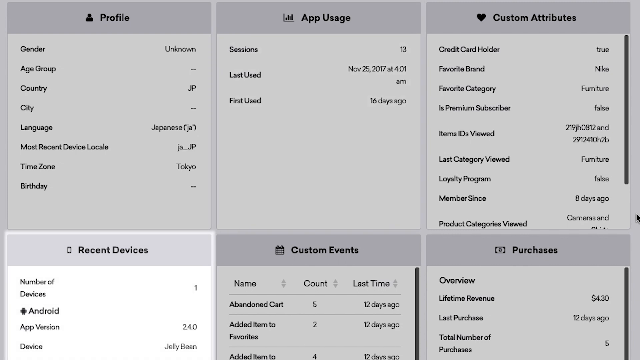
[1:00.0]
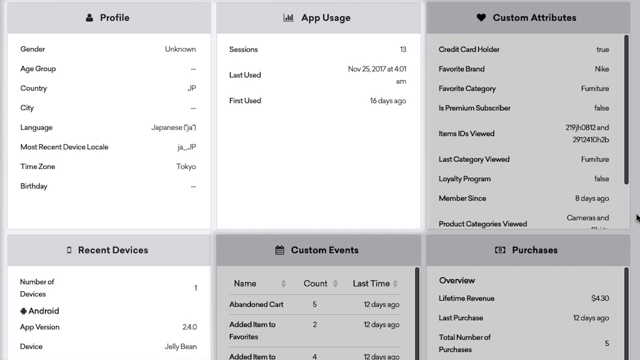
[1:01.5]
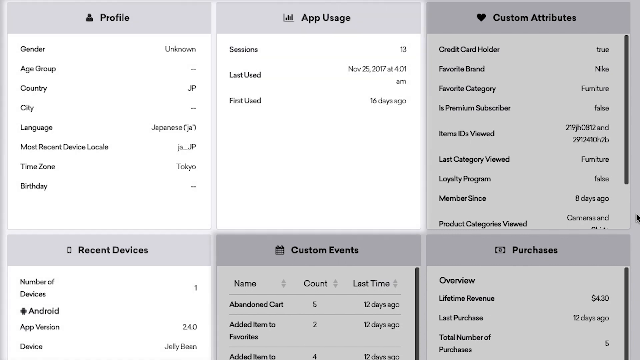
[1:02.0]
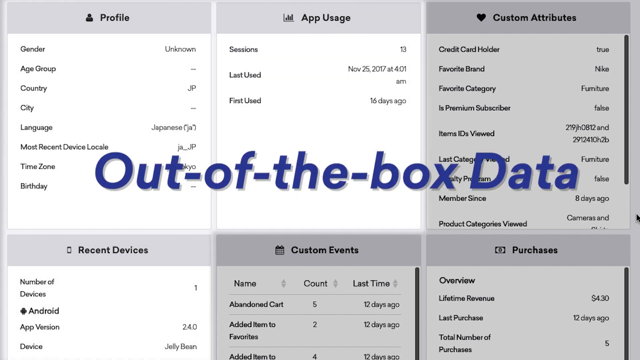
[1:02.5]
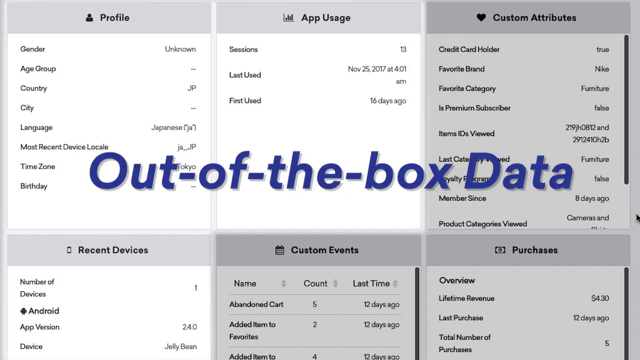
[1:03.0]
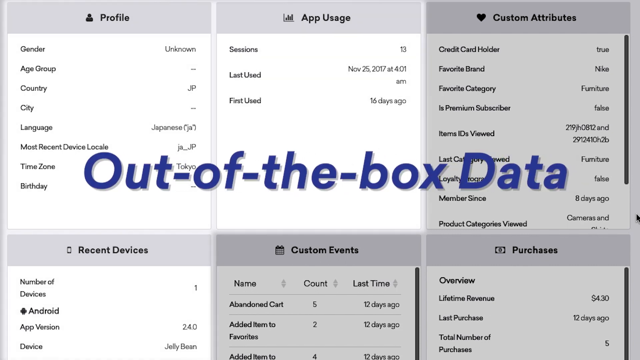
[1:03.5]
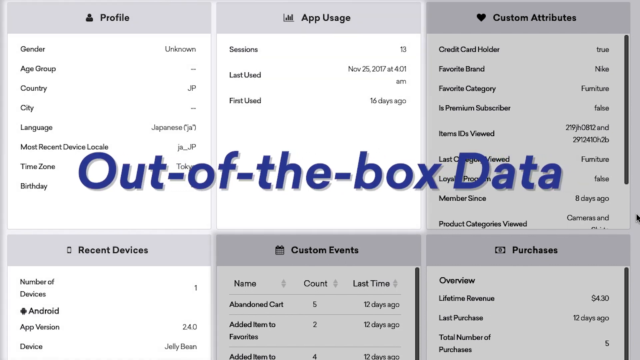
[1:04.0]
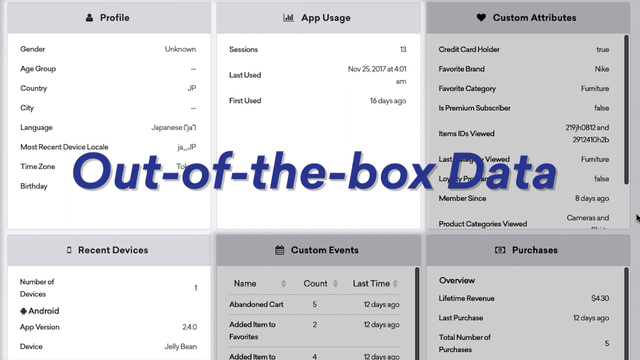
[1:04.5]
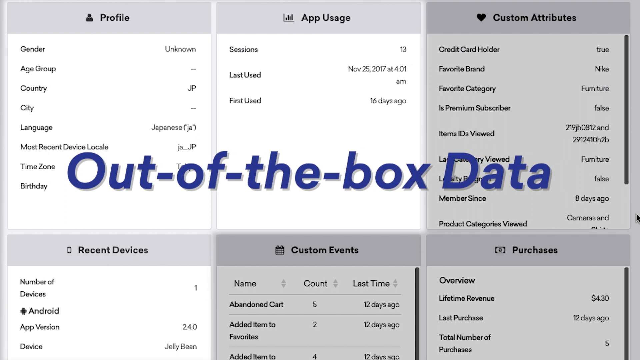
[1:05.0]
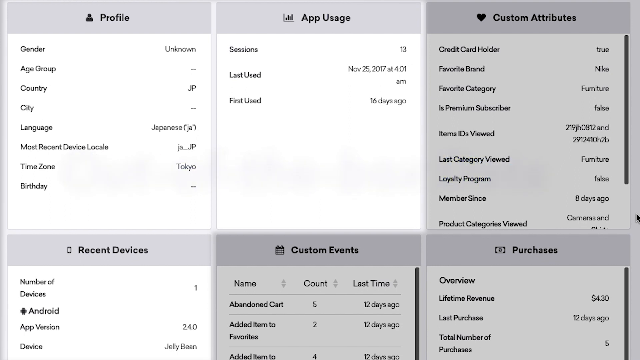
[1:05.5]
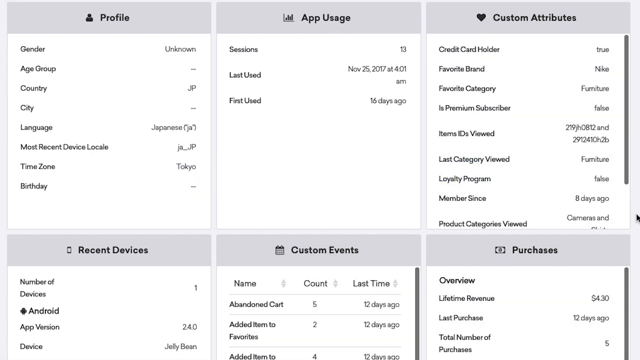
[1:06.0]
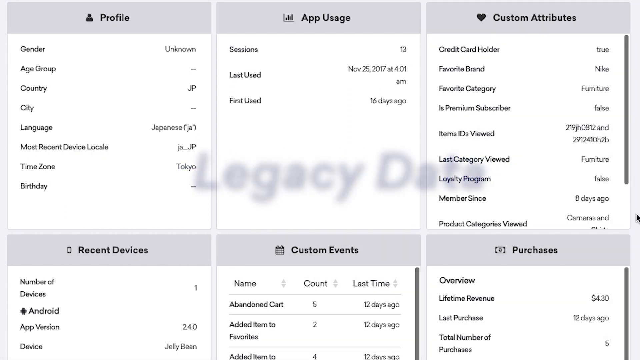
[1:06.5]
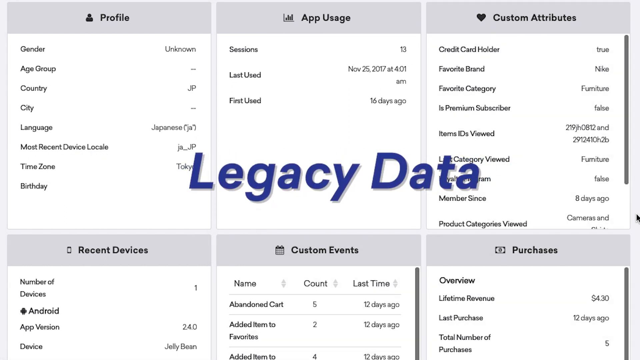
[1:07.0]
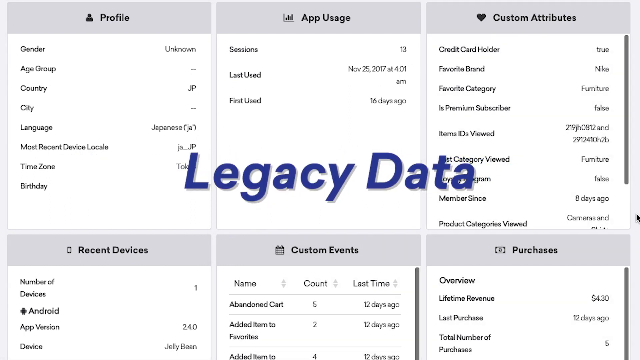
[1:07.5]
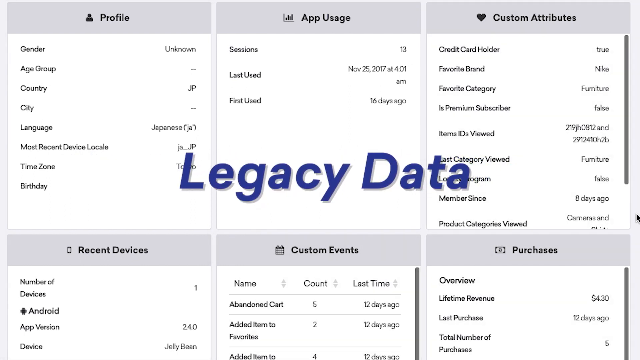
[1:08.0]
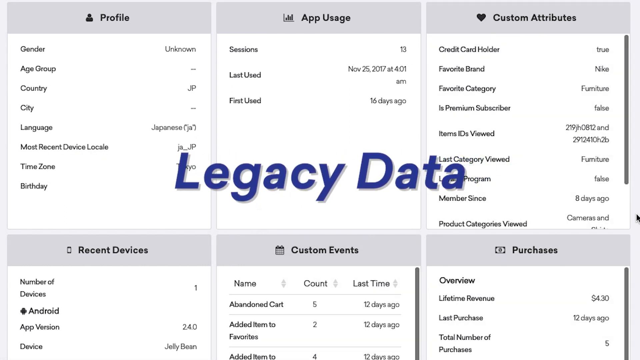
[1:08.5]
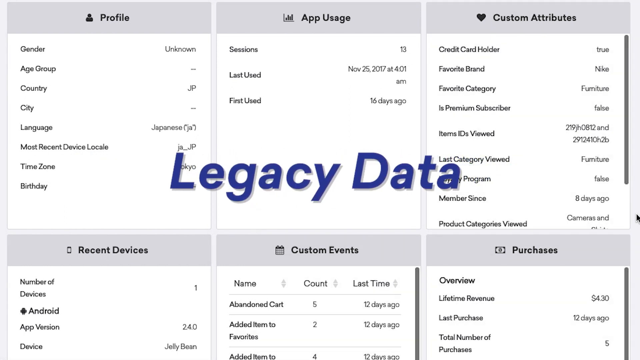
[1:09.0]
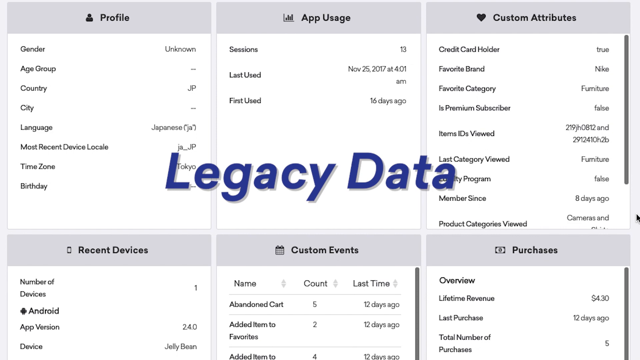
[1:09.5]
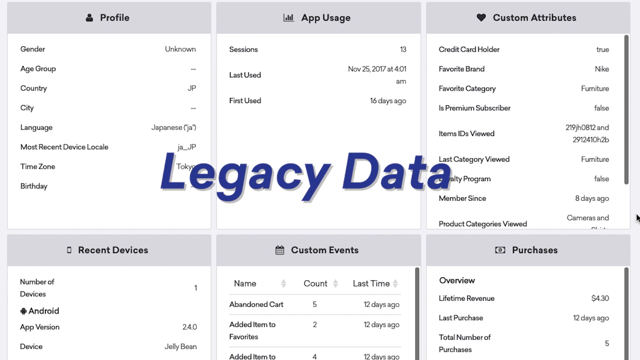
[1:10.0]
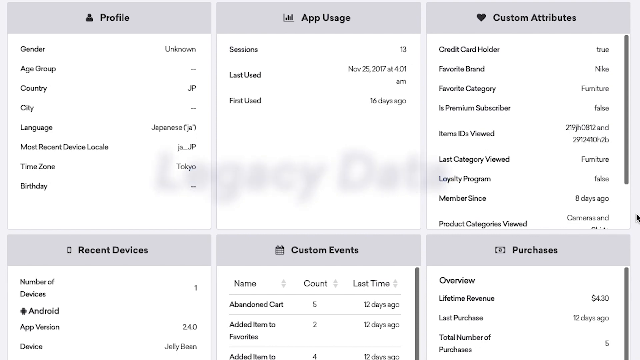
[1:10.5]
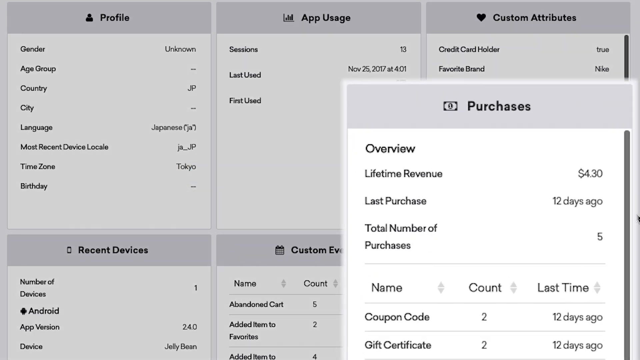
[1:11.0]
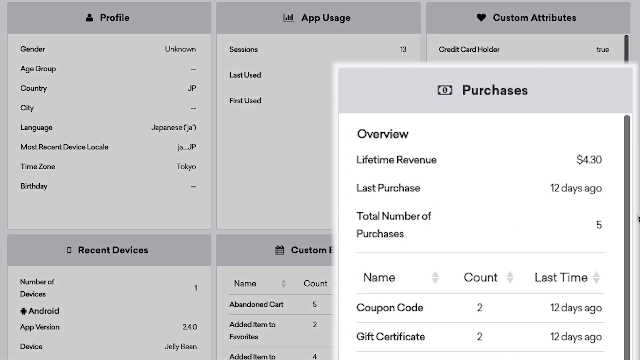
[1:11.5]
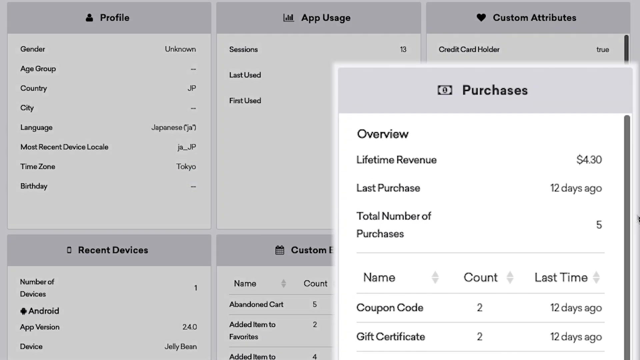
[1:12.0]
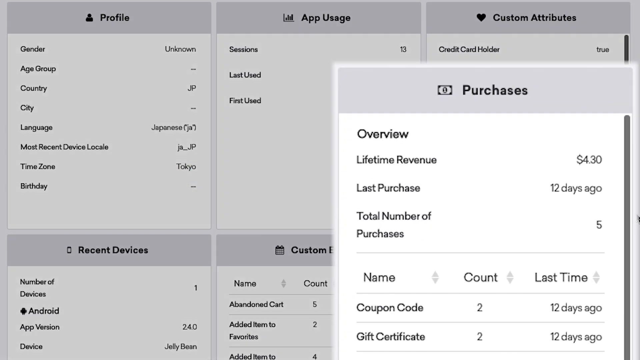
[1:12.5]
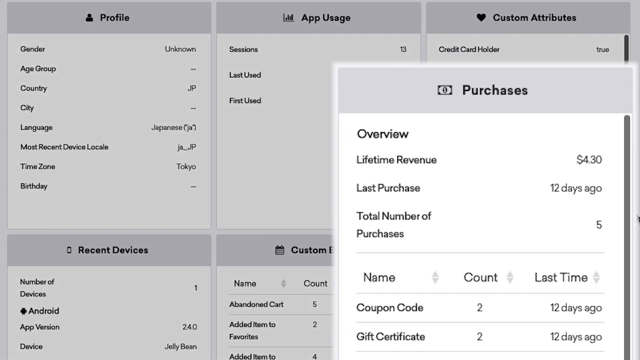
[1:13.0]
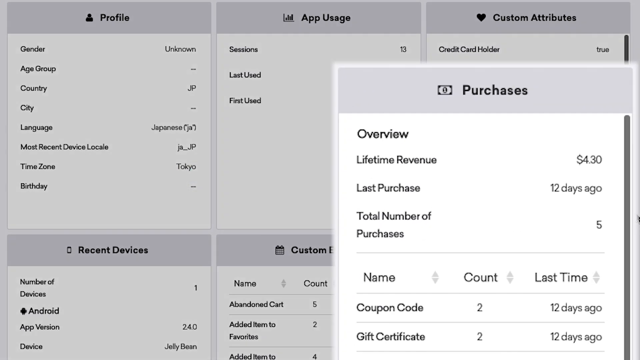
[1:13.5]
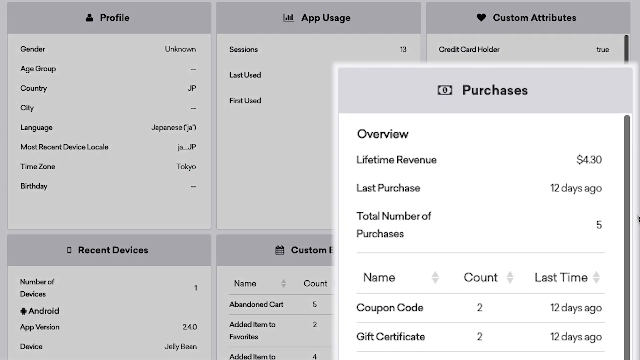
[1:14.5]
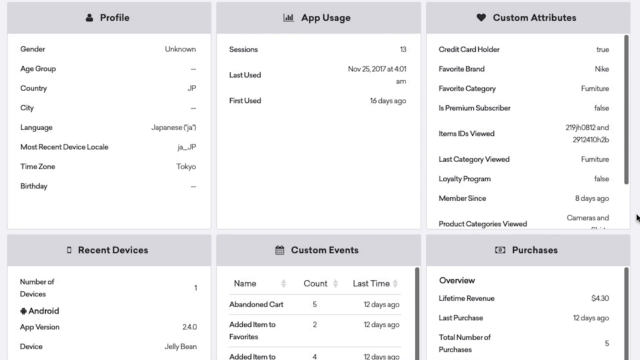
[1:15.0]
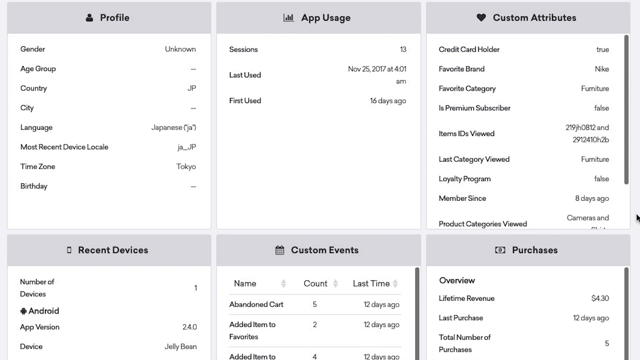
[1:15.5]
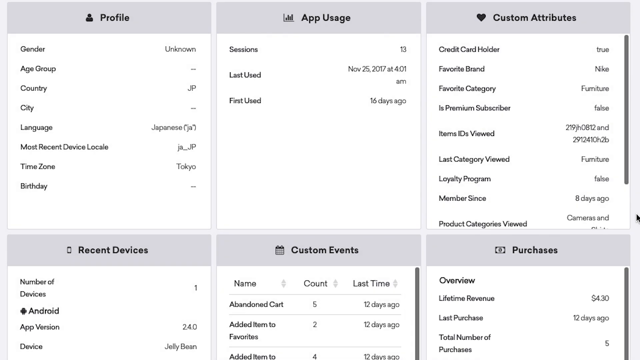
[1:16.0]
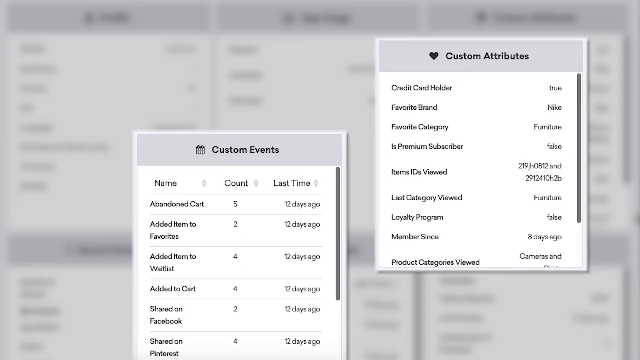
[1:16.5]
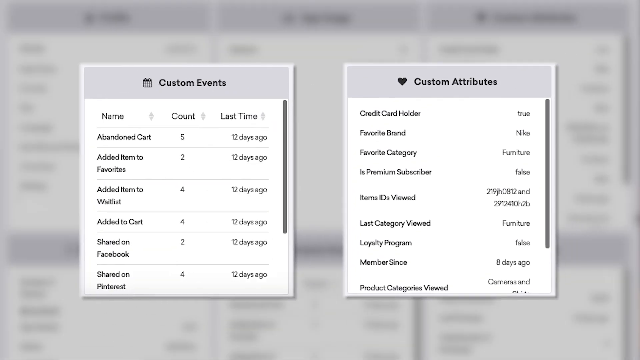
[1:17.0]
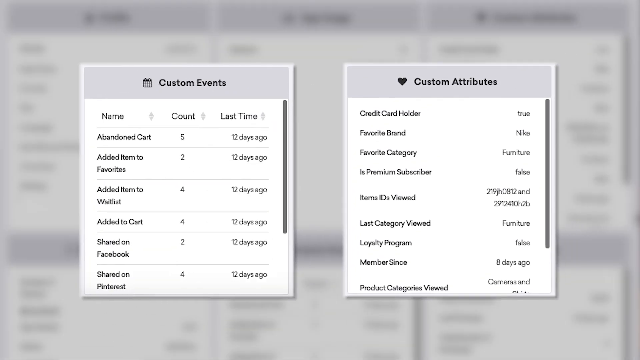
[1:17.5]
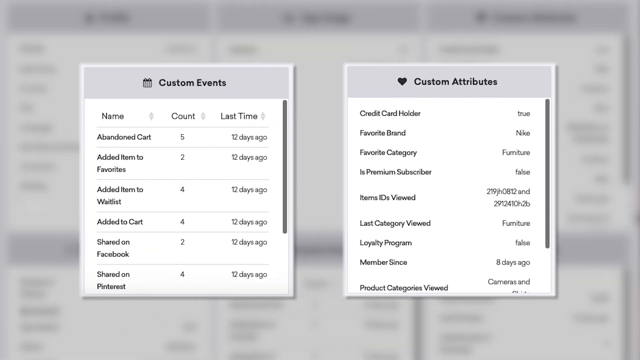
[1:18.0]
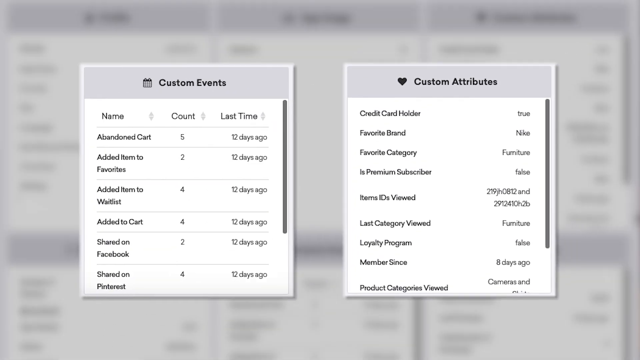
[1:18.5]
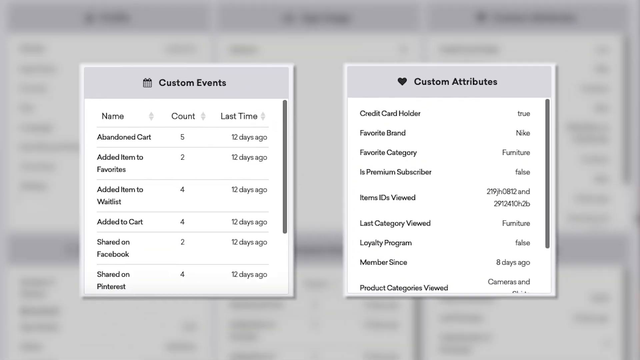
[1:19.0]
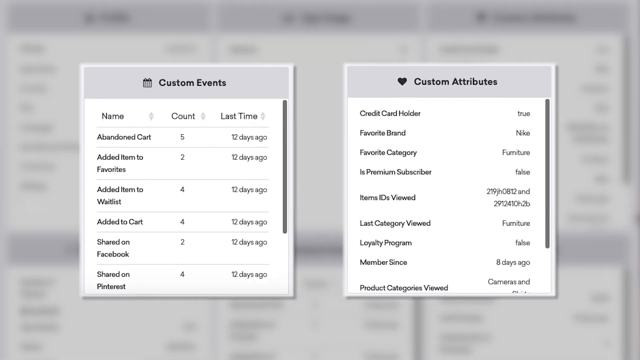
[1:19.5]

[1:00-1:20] A close-up of an app with a page open shows gray banners at the top reading, from left to right, "profile," "app usage" and "custom attributes." Under profile, the woman's gender is not revealed, her language is listed as Japanese and her time zone is Tokyo. Her app usage and custom attributes include whether she is a credit card holder and her favorite brand, Nike; products and categories she has viewed include cameras. Below are further options from left to right, such as recent devices, custom events and purchases. Suddenly the words "out-of-the-box data" appear in dark blue text in the center of the screen and scroll from right to left across the image.